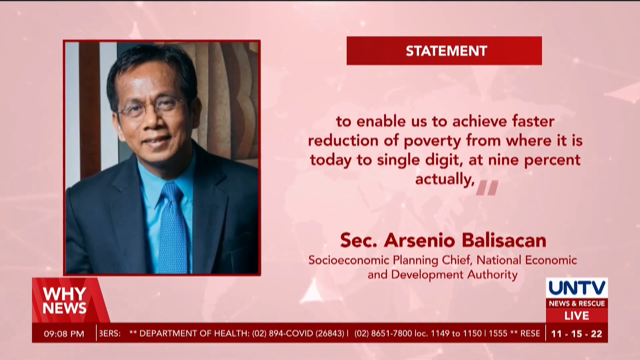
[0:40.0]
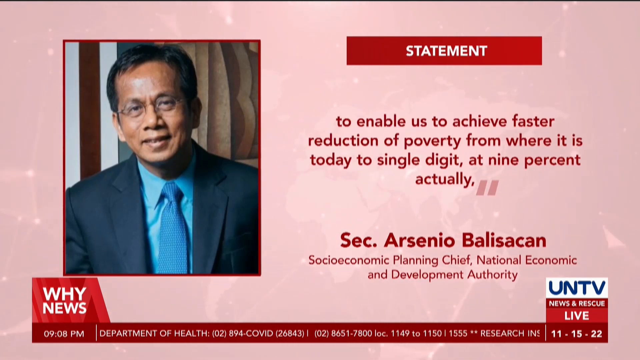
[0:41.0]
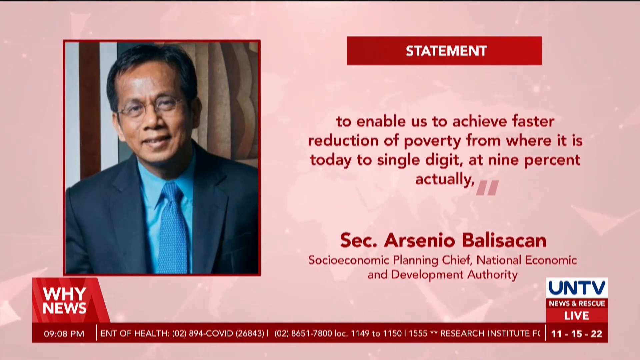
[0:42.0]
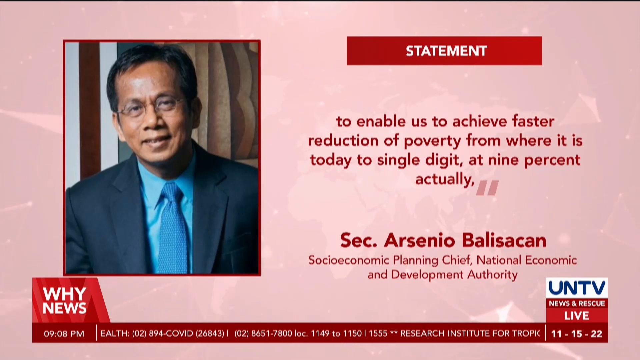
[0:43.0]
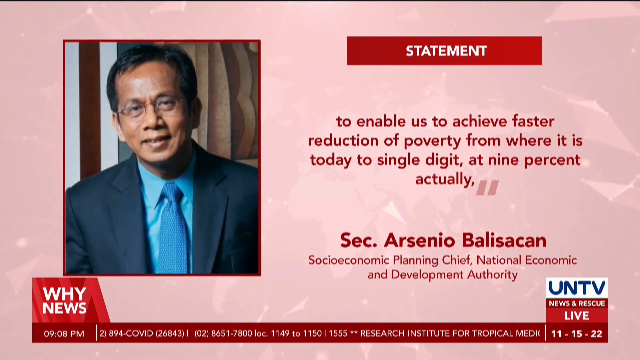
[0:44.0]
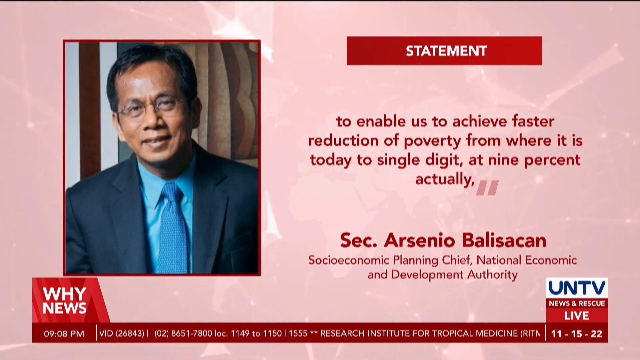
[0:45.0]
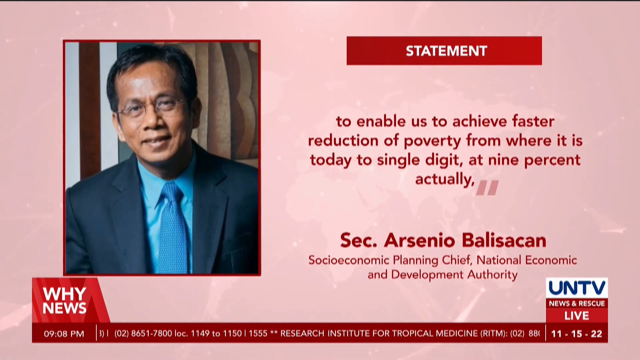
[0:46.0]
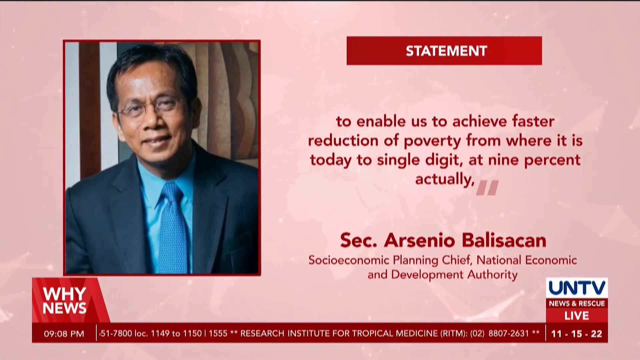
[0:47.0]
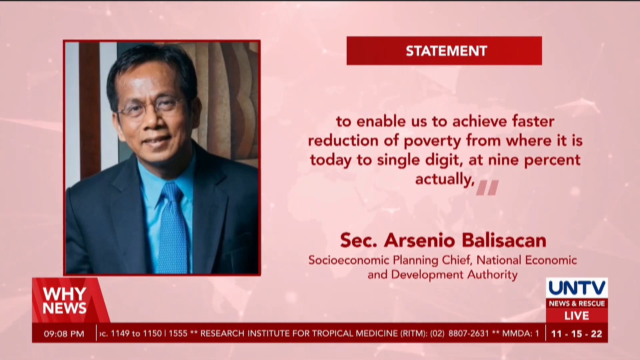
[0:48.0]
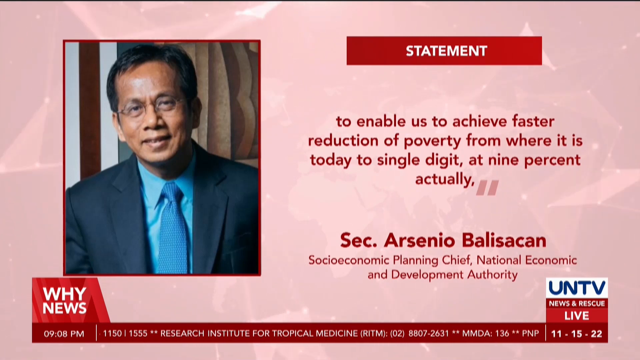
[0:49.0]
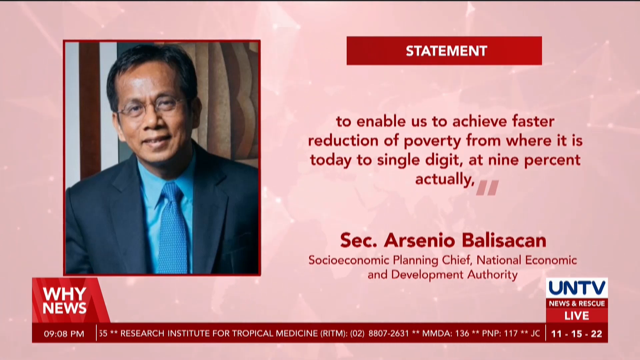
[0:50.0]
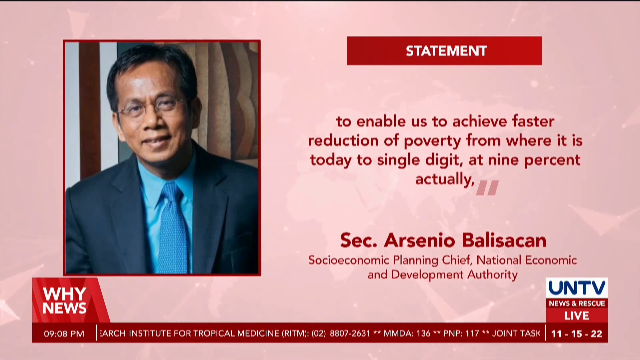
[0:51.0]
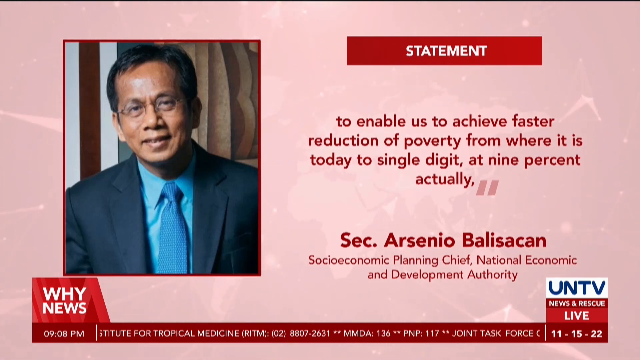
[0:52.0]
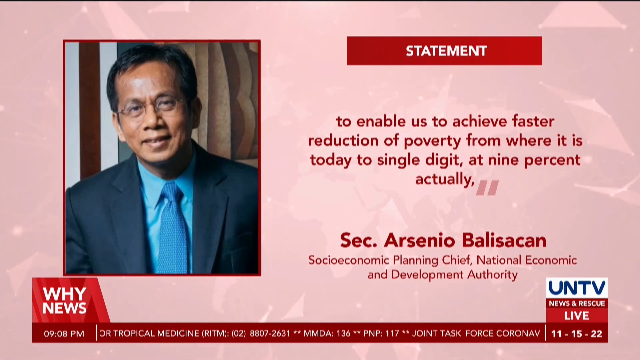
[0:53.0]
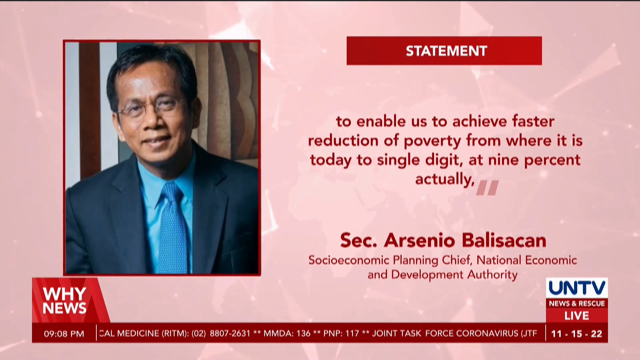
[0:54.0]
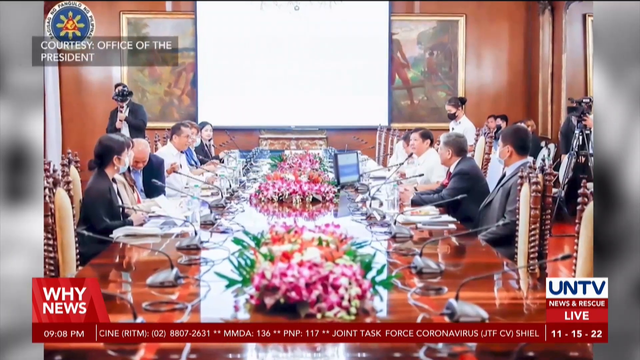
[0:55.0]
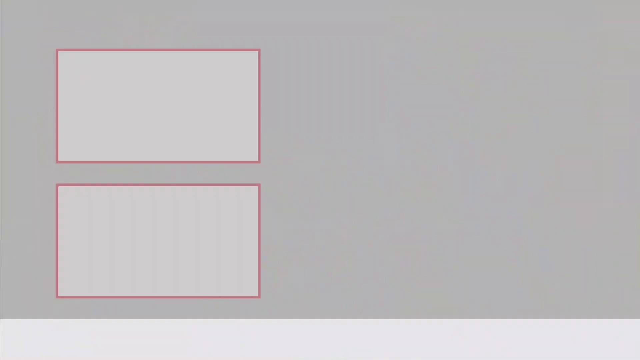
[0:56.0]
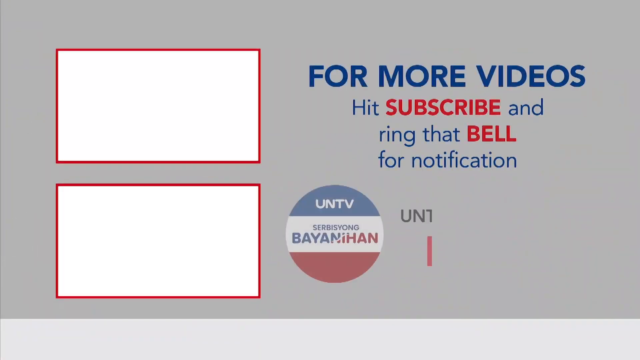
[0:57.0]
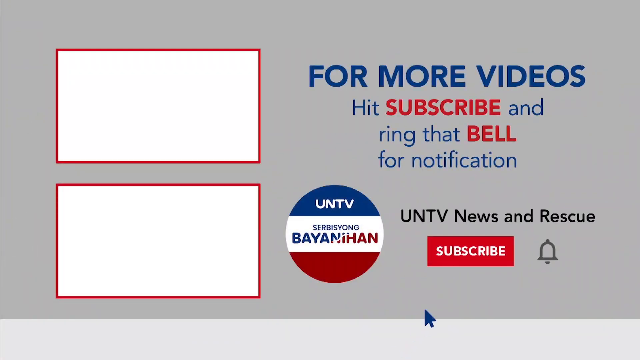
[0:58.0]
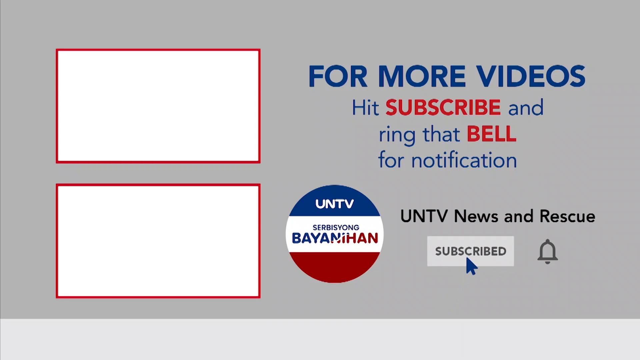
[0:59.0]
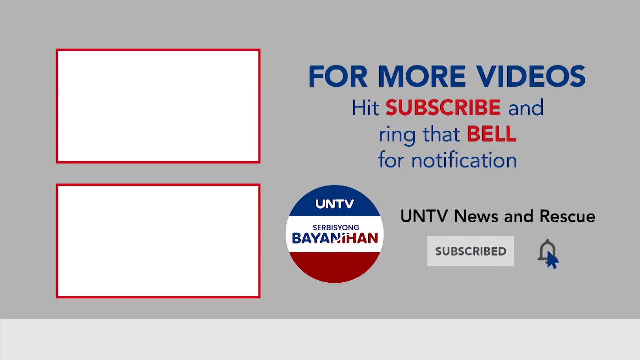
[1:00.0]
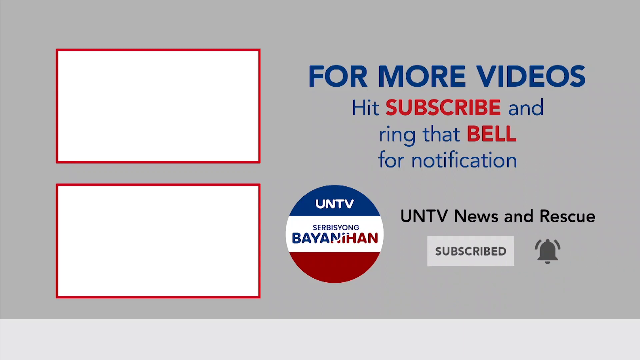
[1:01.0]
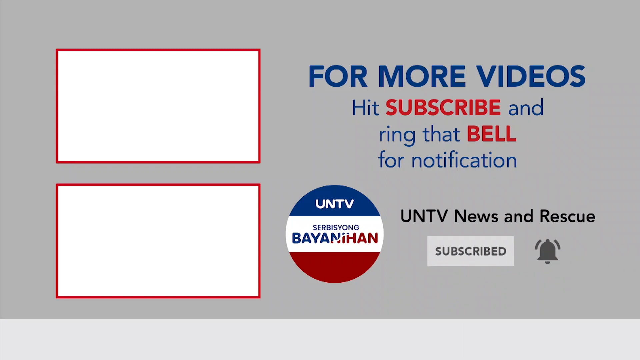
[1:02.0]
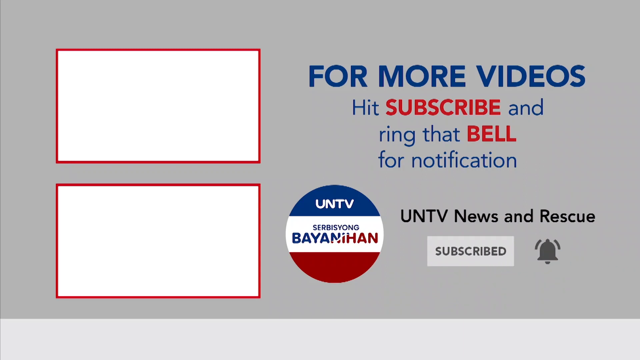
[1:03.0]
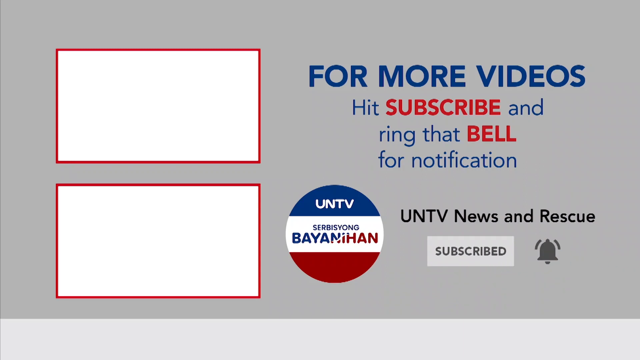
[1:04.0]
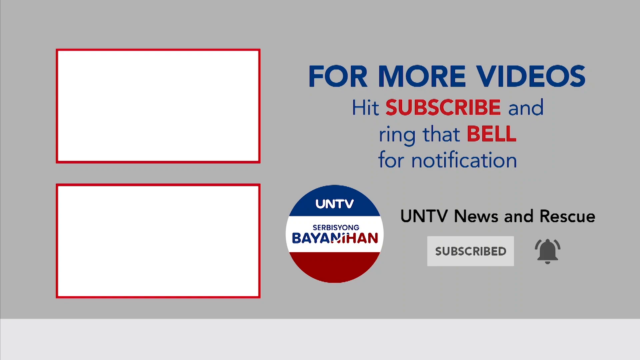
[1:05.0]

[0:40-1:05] Another statement by the same person appears, reading "to enable us to achieve faster reduction of poverty from where it is today in single digits, in 9% actually," attributed to "Secretary Asenoy Balisakan, Social Economic Planning Chief, National Economic and Development Authority," along with "News and Rescue Life." This stays on the screen for a while, with his picture still beside the statement against a pinkish background with animation. The video then moves back to a group sitting in a conference room, and then to the news channel's outro, which shows the channel name and "subscribe for more."